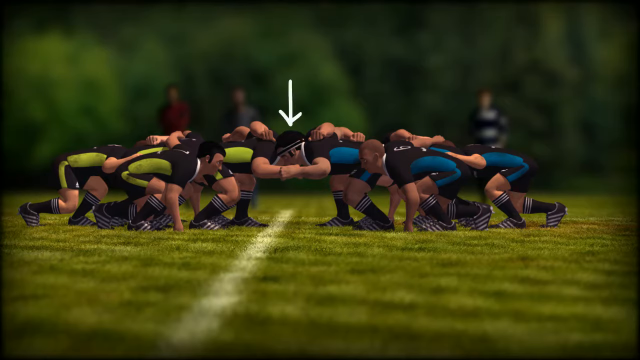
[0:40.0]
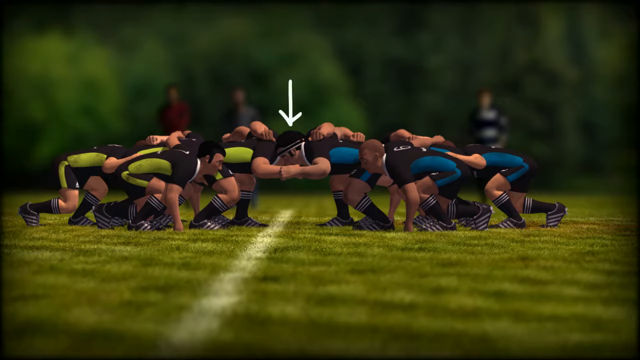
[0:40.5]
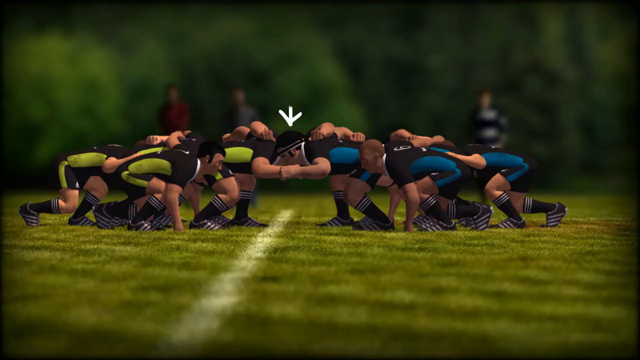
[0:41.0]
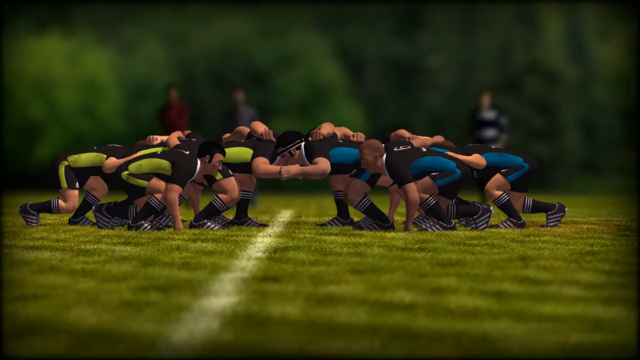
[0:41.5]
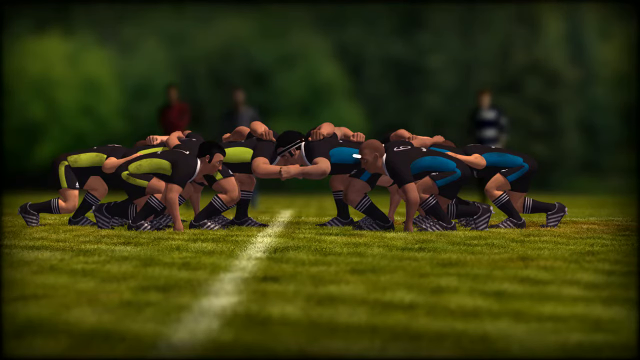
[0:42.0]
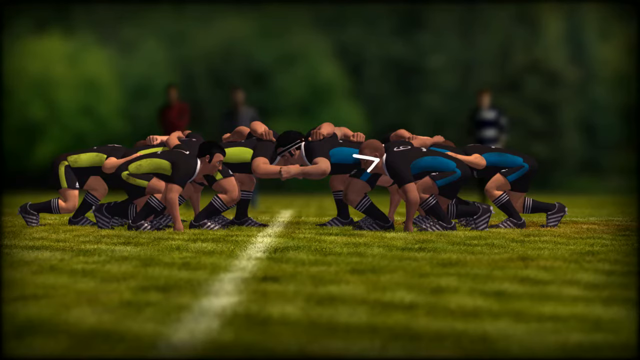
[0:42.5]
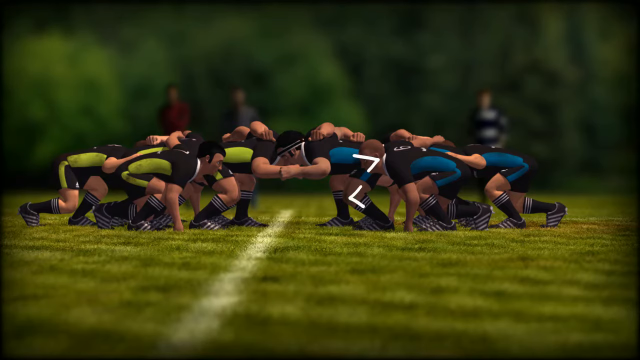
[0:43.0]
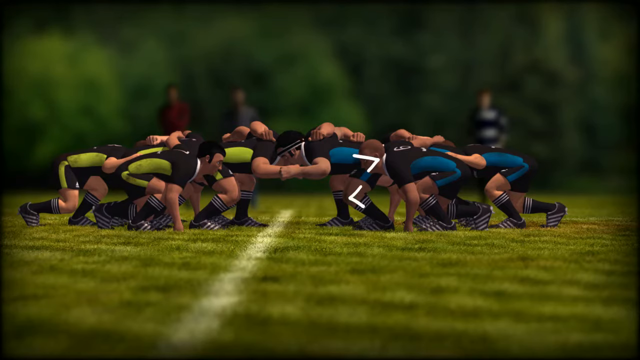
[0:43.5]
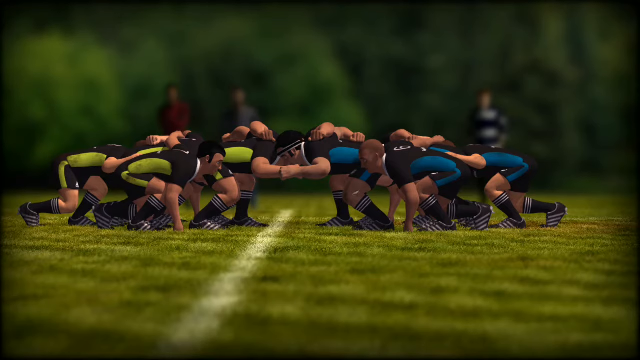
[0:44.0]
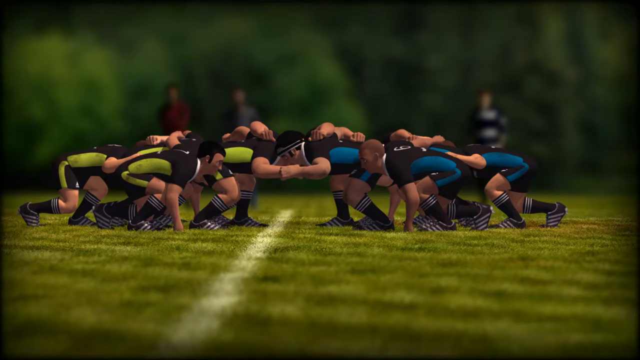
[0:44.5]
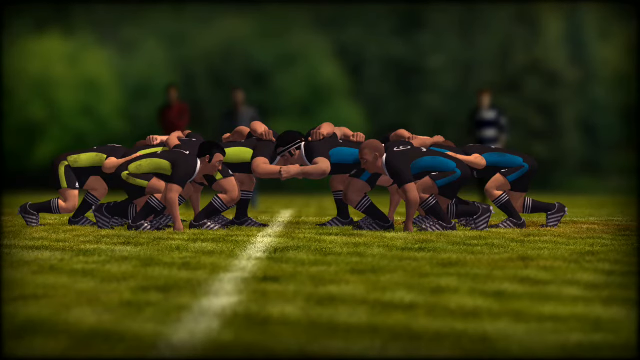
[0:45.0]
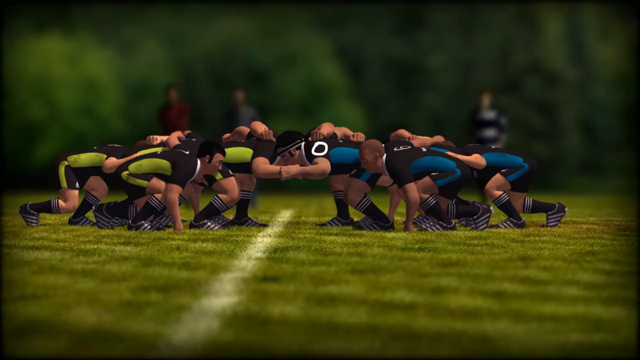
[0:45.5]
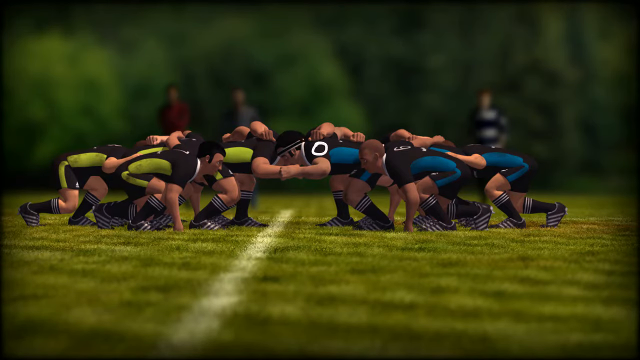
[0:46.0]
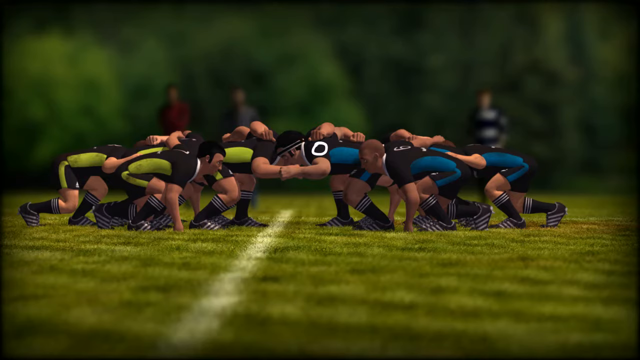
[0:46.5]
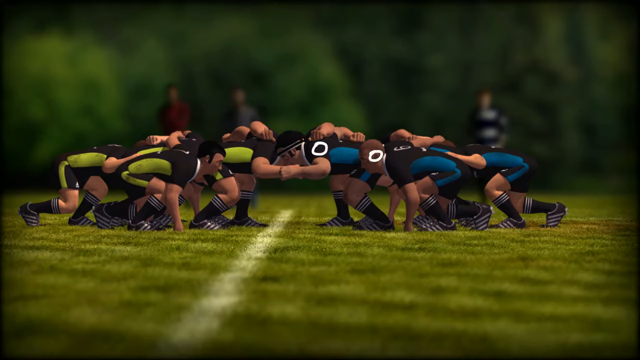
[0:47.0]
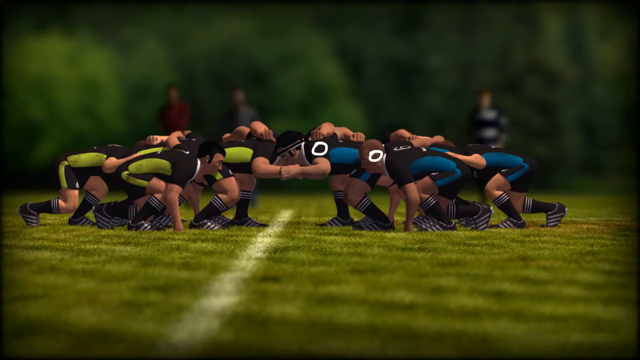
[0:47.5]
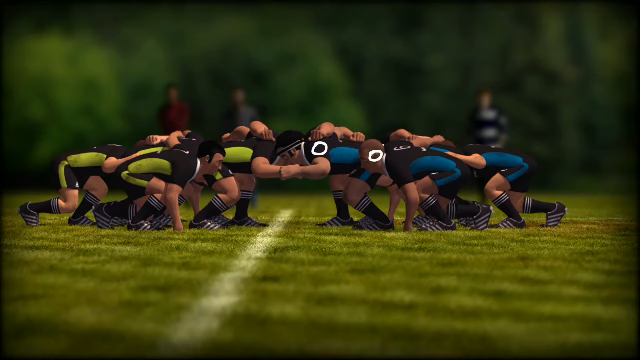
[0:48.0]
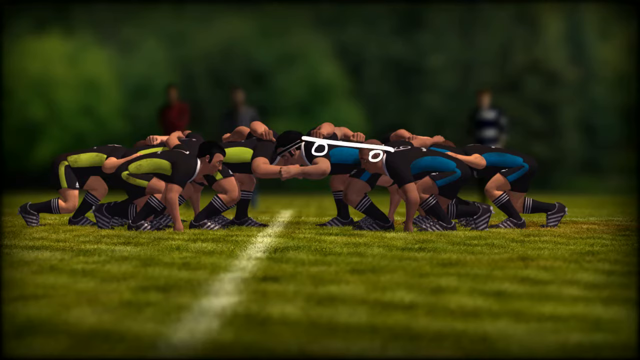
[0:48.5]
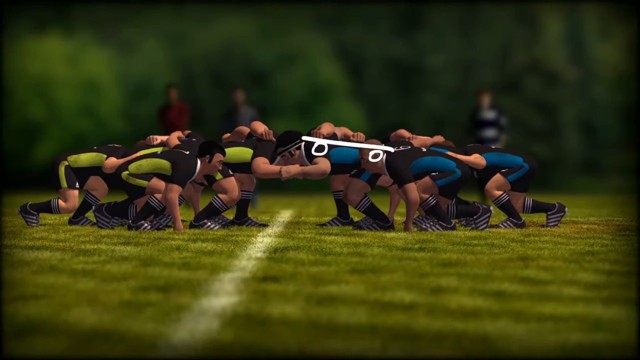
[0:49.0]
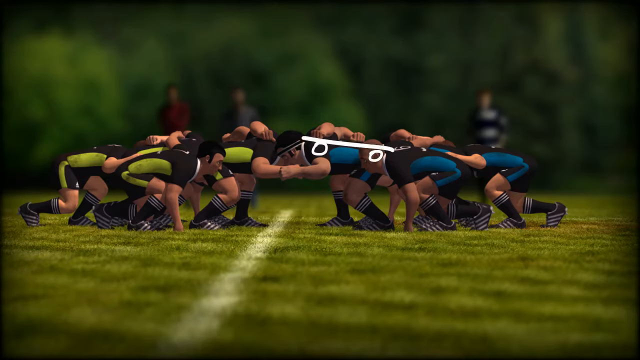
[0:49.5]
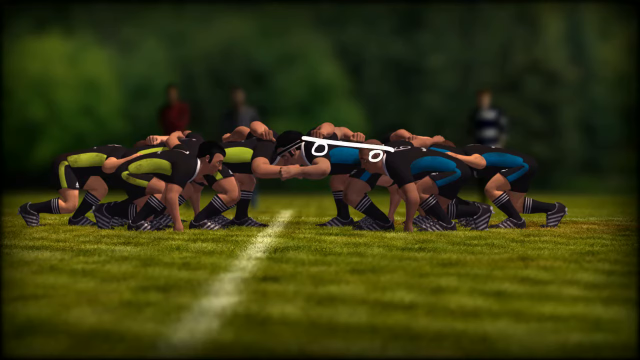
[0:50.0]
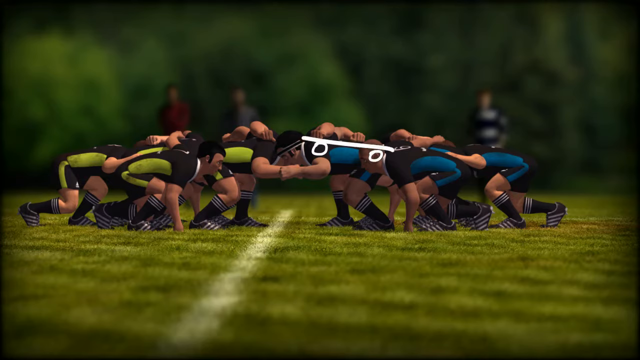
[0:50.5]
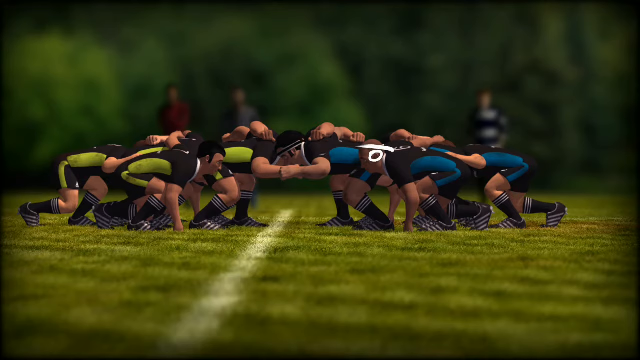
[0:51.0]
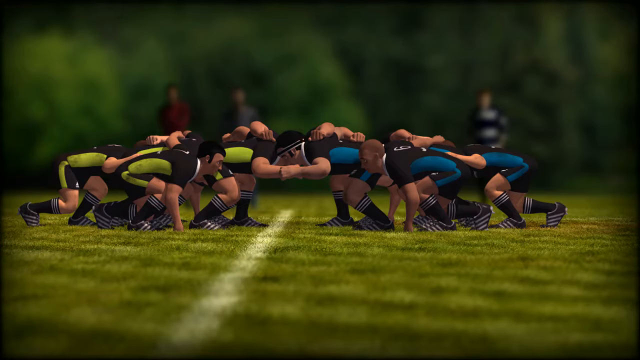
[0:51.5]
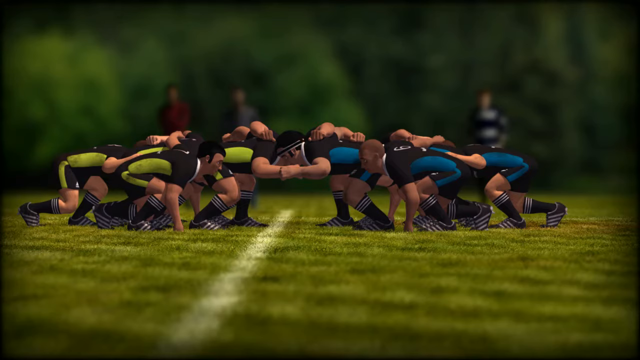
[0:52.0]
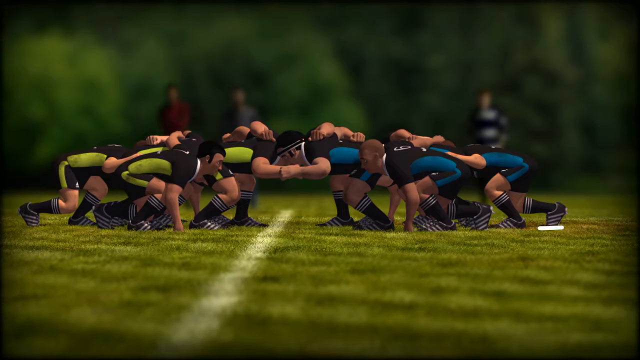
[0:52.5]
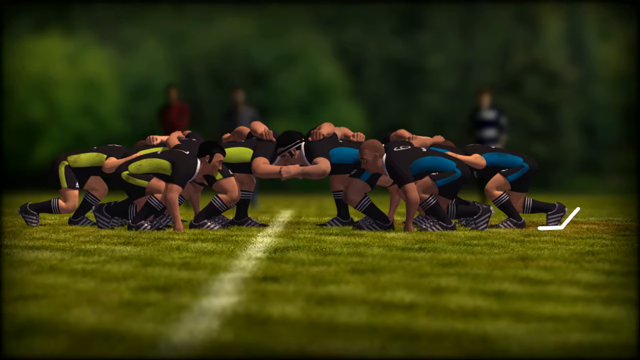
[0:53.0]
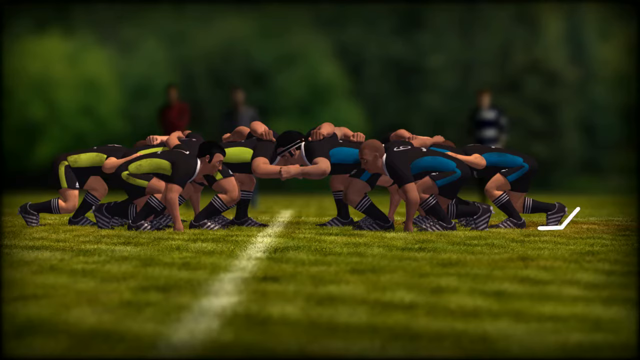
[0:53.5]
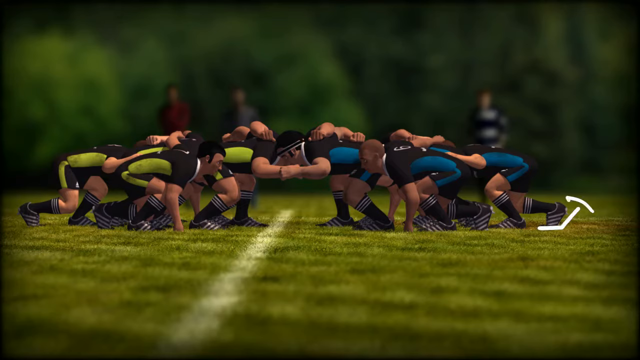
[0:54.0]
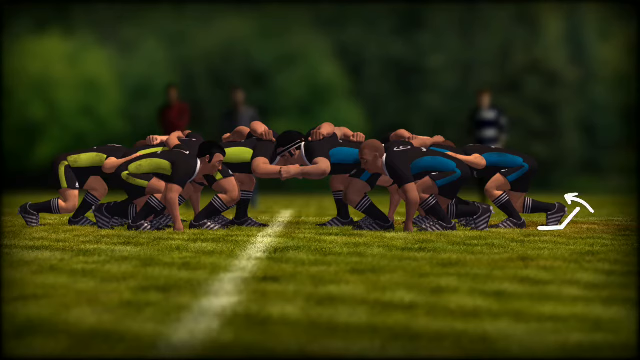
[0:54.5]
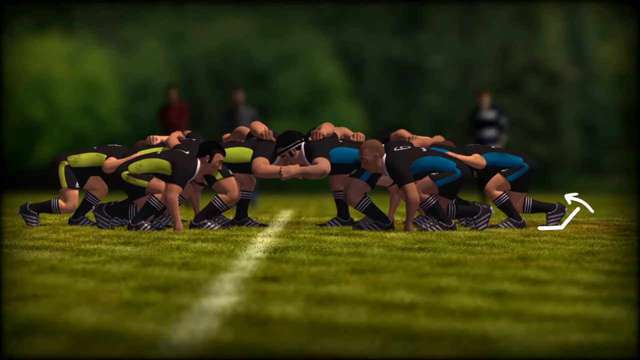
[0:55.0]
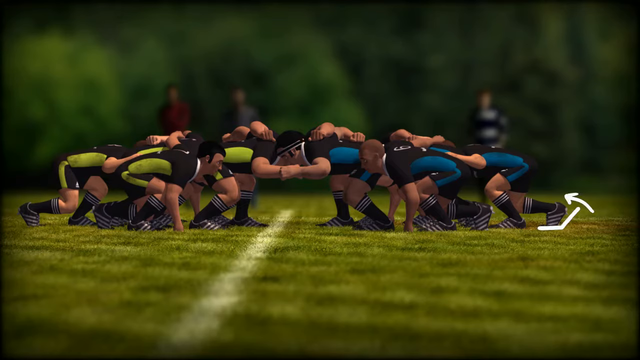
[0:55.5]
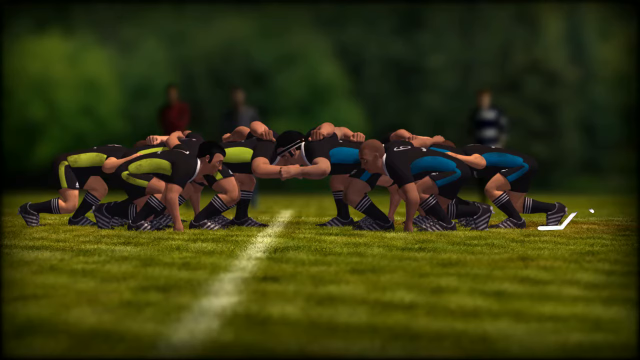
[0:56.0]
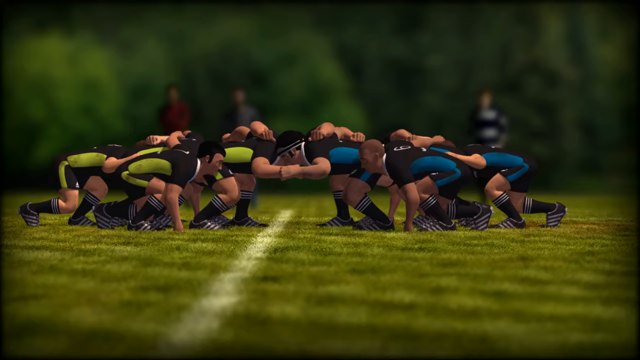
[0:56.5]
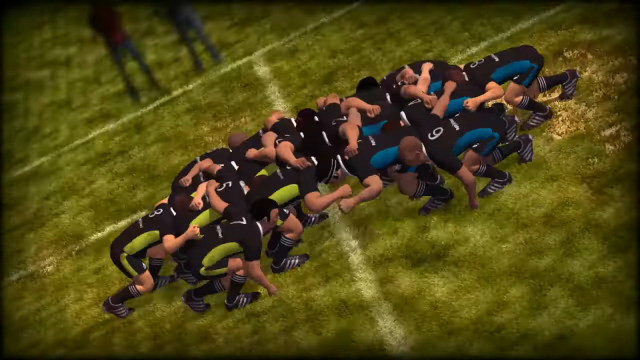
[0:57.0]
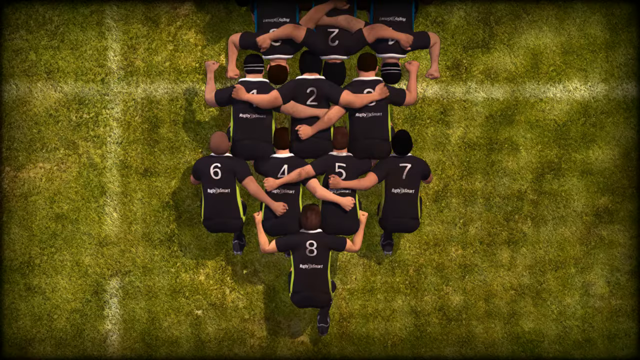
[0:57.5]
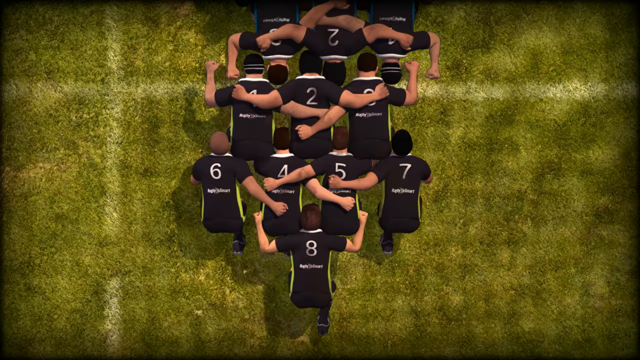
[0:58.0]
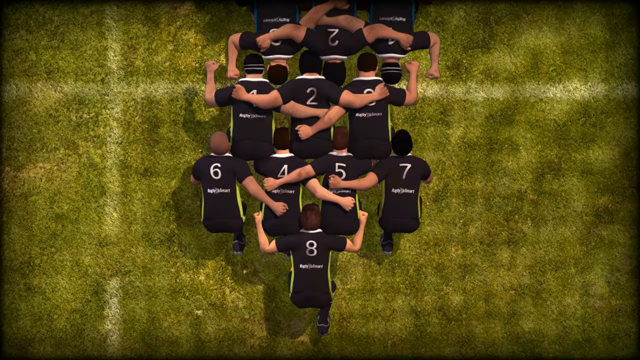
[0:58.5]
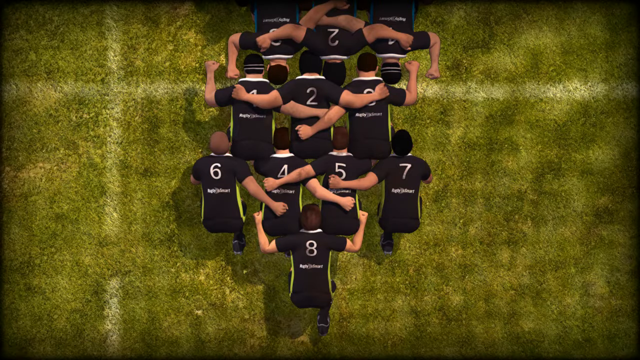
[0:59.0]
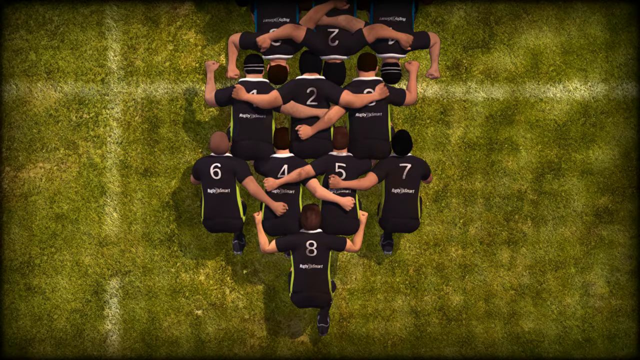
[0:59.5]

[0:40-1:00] The explanation of how a scrum takes place in a rugby union match continues, with the two teams shown as 3D animated players. The first team's players wear black shirts and black shorts with green stripes; the second team's wear black shirts and black shorts with blue stripes. Both teams are engaged in the scrum: the players from both teams are crouched and the front rows are interlocked with one another. A white arrow is drawn pointing downwards towards the head of one of the front-row players. Two arrows are then drawn towards the second row. Next, a circle is drawn on the shoulder of a first-row player, followed by a white circle on the head of a second-row player, and a horizontal line is drawn between these two circles. An arrow is then drawn against the back foot of a player in the last row. The view then changes to show the rugby players from a bird's eye view.